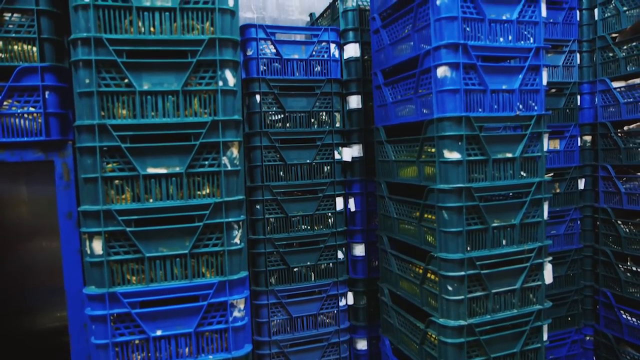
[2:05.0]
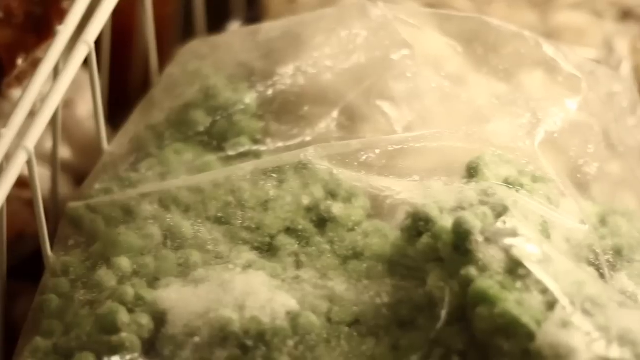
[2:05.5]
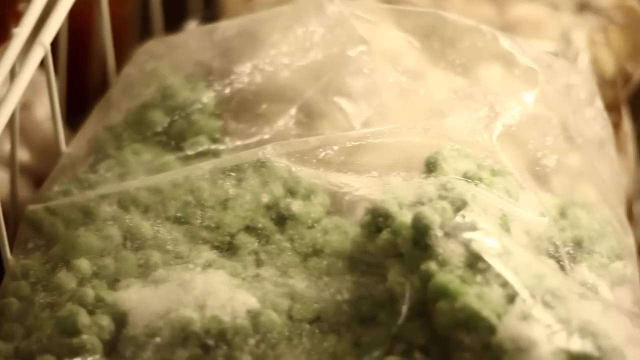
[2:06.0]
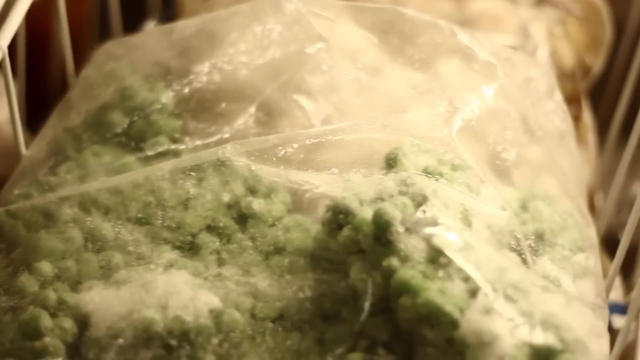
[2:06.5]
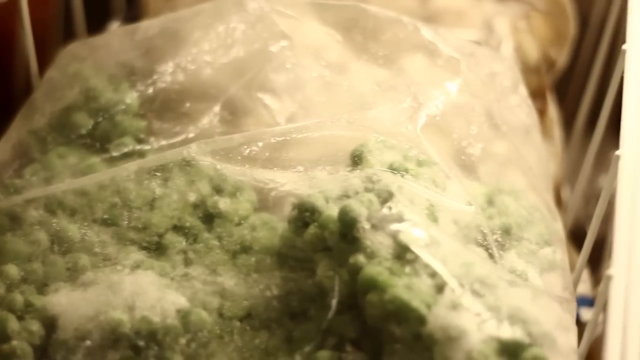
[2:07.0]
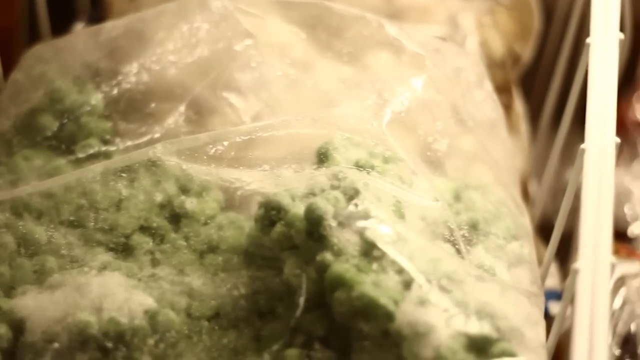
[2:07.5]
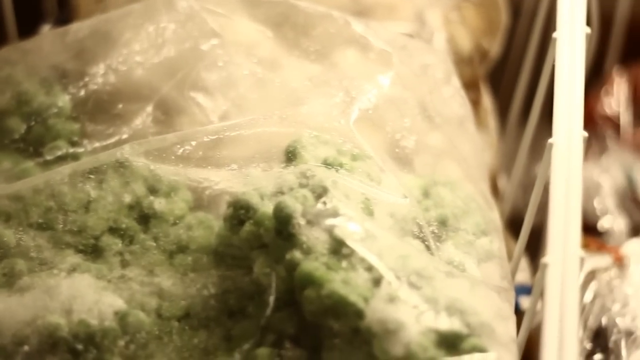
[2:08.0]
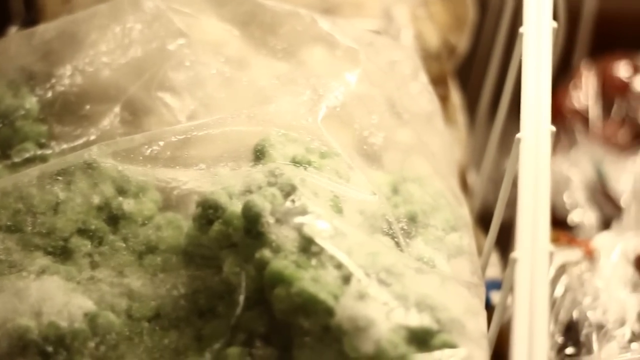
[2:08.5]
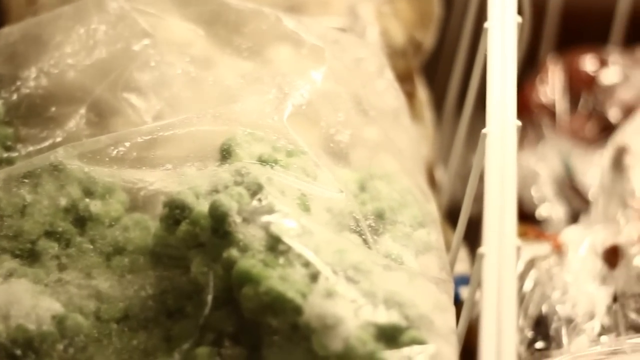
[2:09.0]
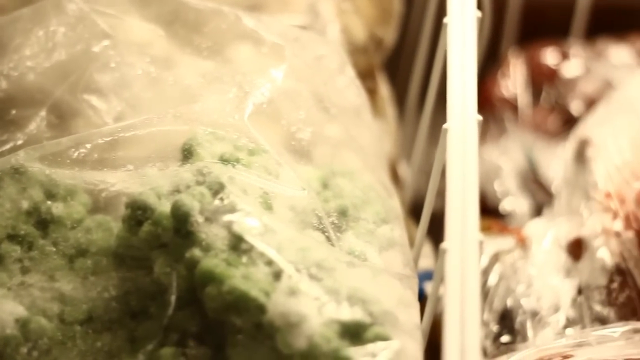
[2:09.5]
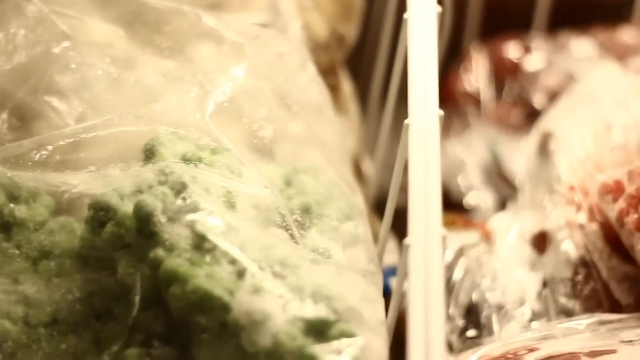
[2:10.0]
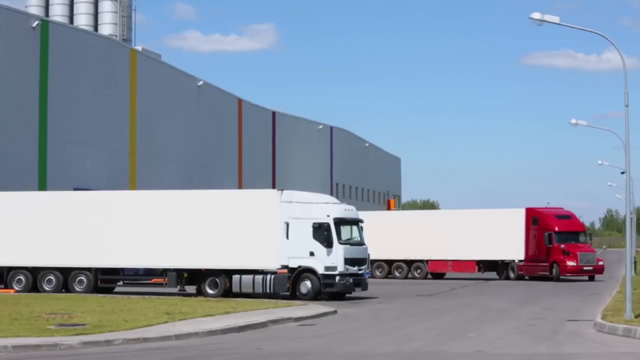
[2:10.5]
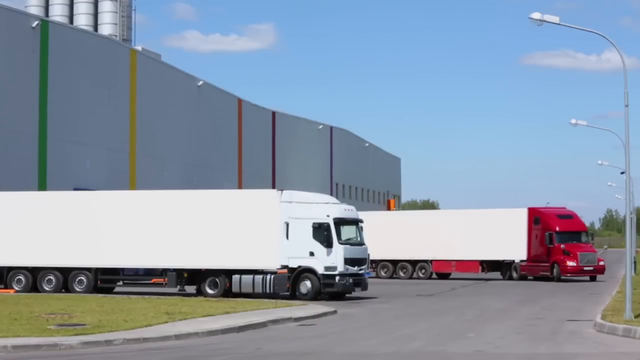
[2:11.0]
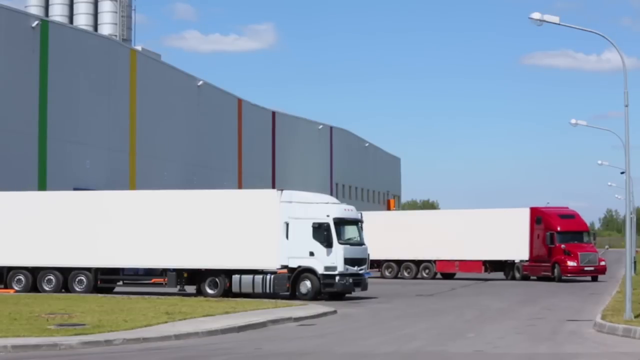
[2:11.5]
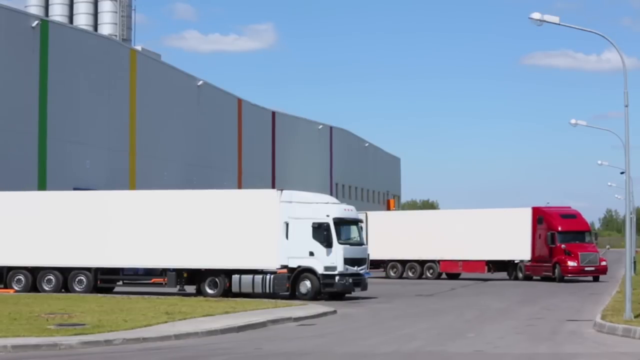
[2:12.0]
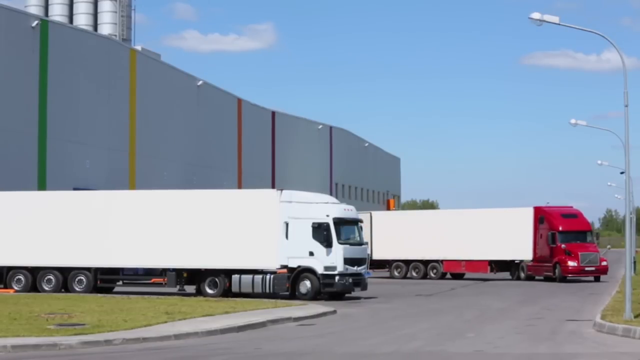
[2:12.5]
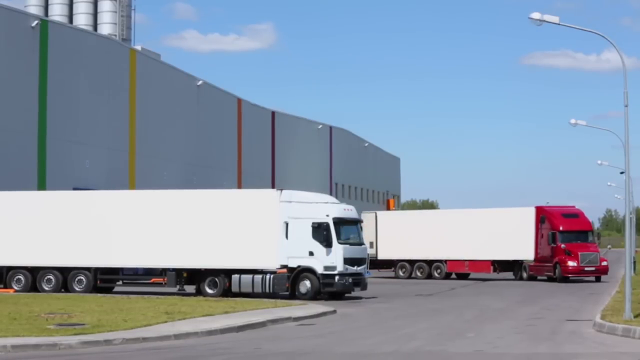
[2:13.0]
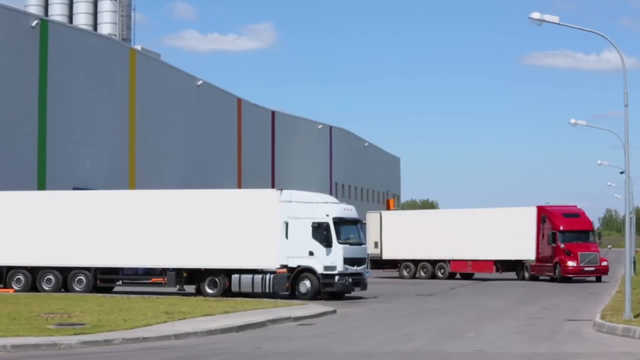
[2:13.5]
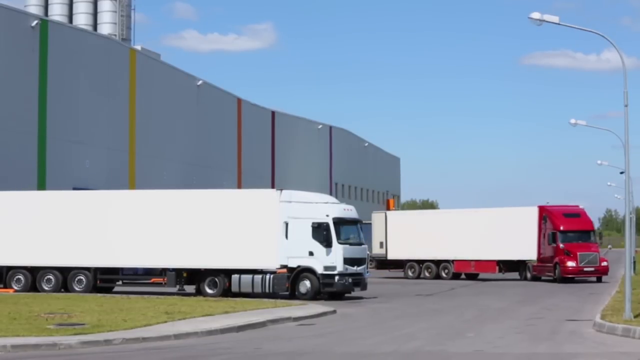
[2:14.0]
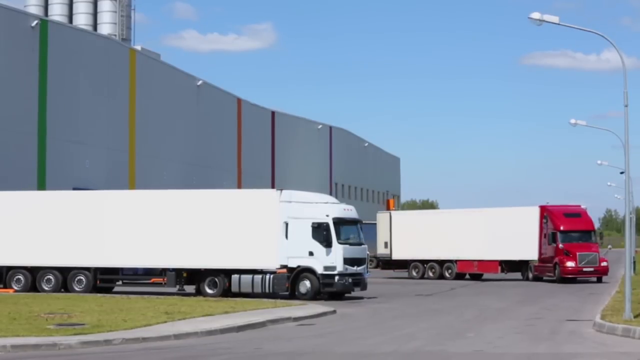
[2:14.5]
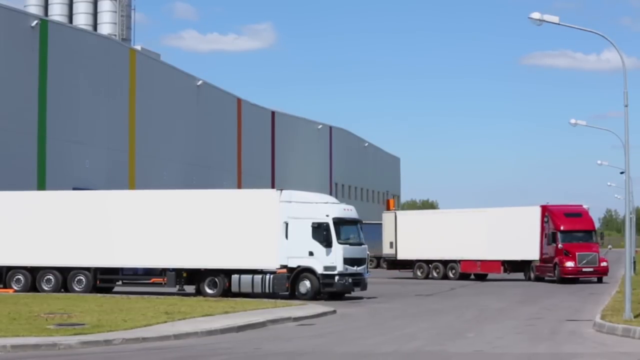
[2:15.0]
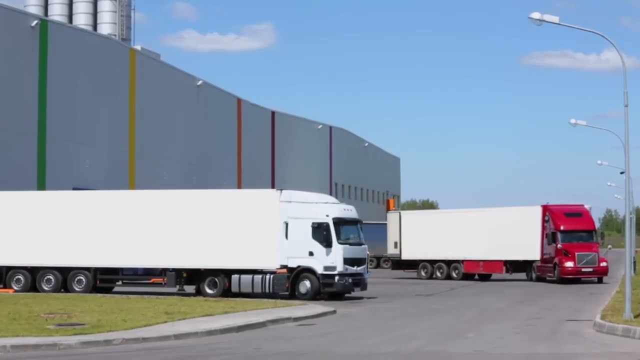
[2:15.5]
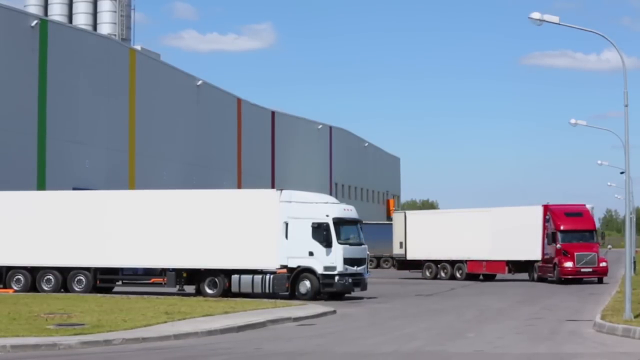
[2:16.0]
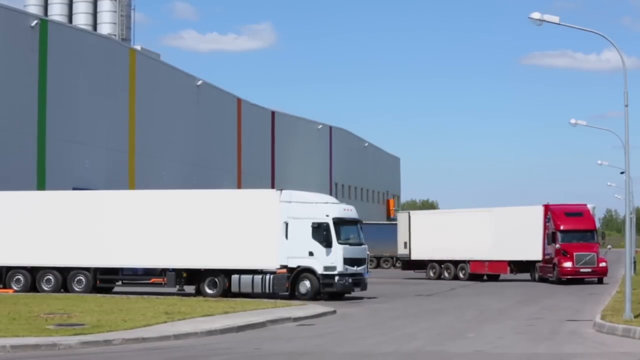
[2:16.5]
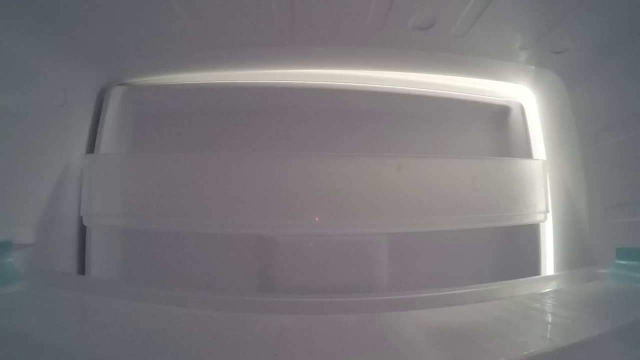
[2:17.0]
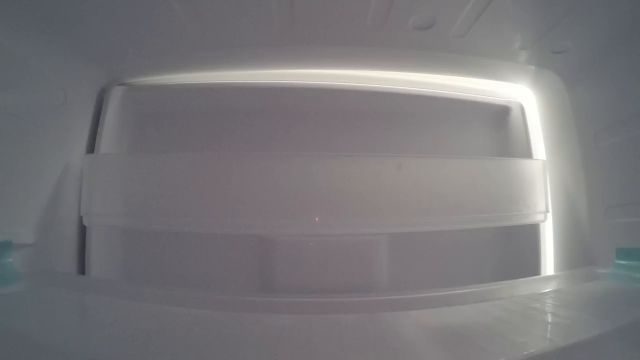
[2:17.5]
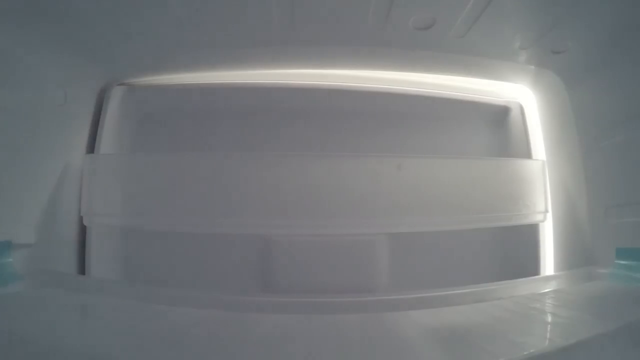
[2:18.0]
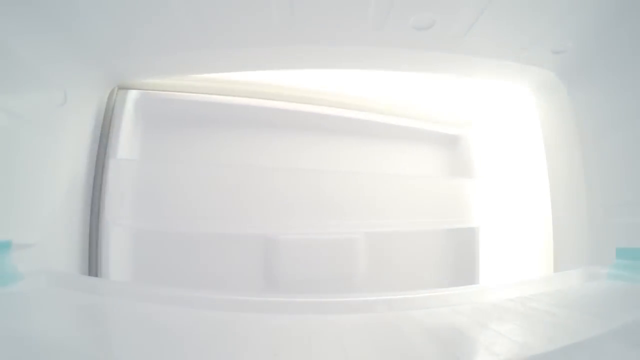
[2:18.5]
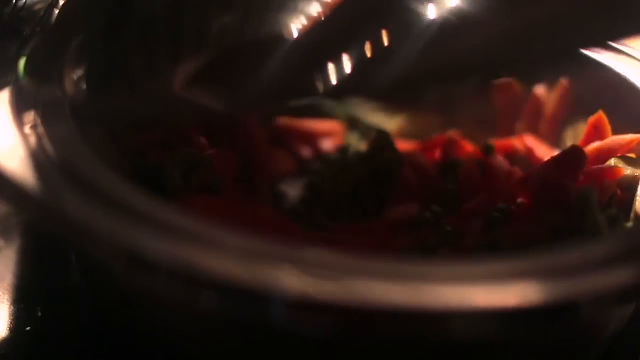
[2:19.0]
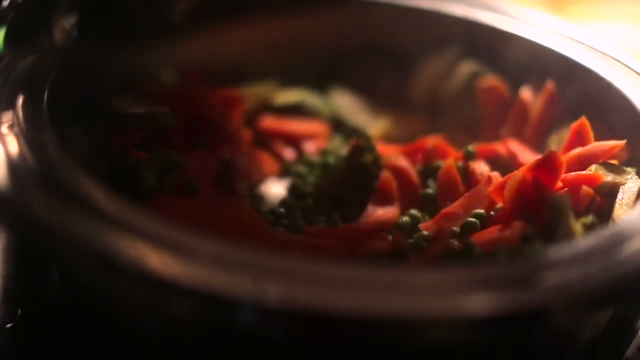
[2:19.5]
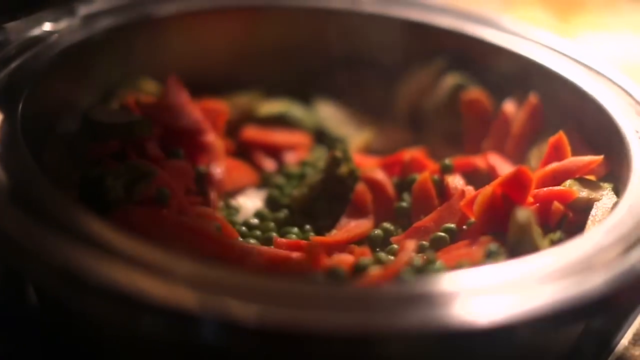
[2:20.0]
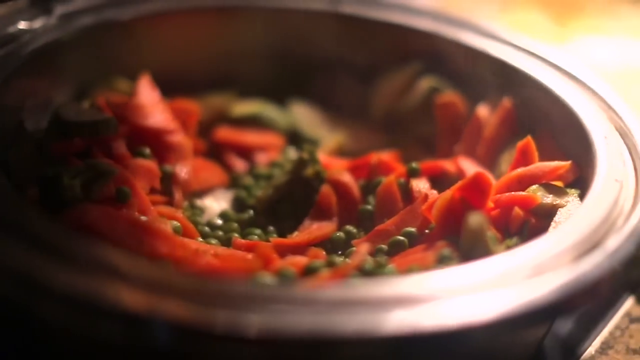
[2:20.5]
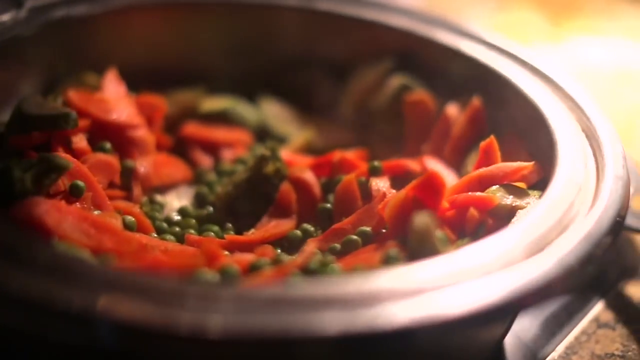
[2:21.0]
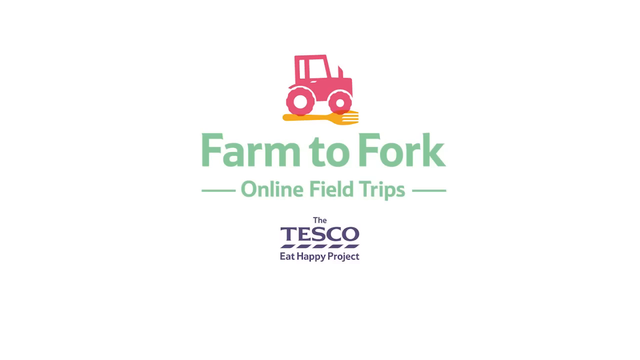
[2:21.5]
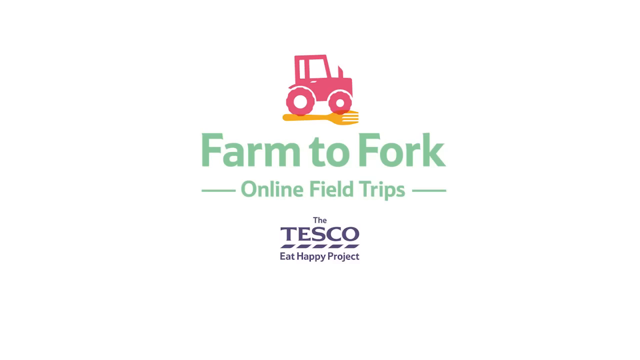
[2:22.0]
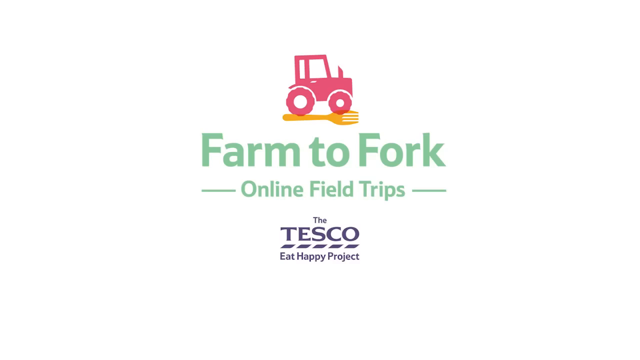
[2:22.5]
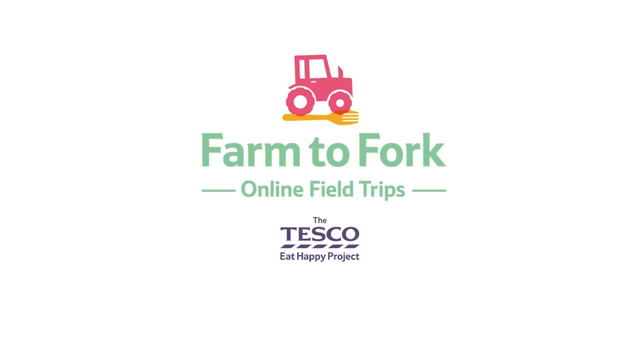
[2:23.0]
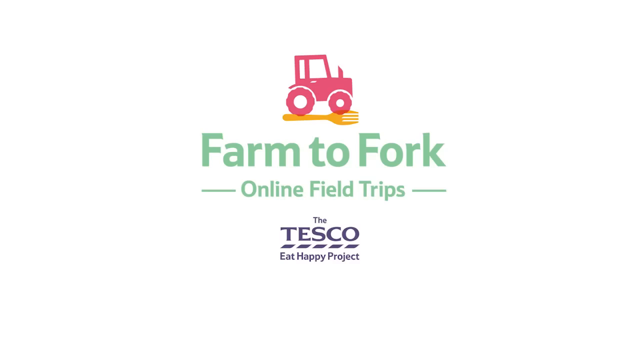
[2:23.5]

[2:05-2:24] What looks like frozen peas in bags and the process of driving them off to stores is shown. Outside a warehouse are two tractor trailers: one is a long white trailer with a red cab, and the other has a white cab. Both are pulled up to the warehouse to be loaded. The warehouse has red, yellow and green stripes. In the outdoor shot, lights are visible. Next, someone opens a freezer or refrigerator door, filmed from what looks like a camera placed inside it. The very last shot shows vegetables inside some type of steamer.